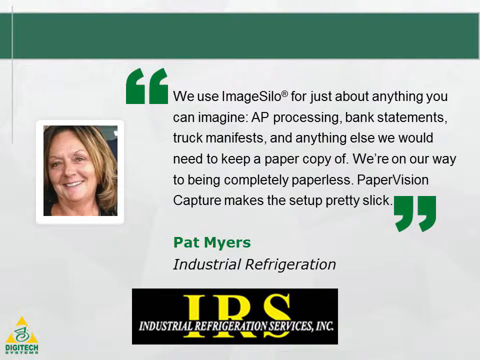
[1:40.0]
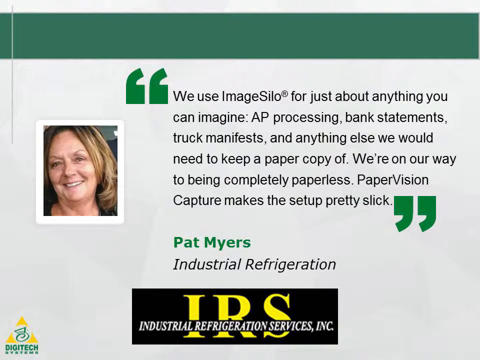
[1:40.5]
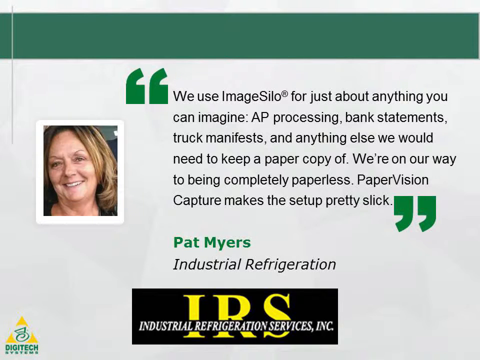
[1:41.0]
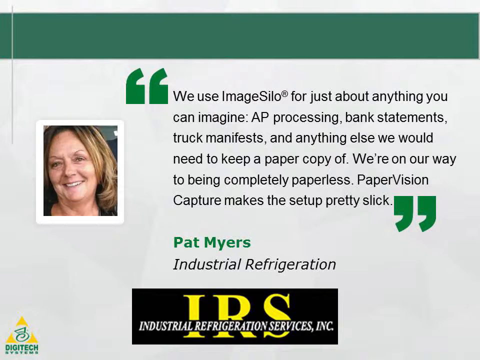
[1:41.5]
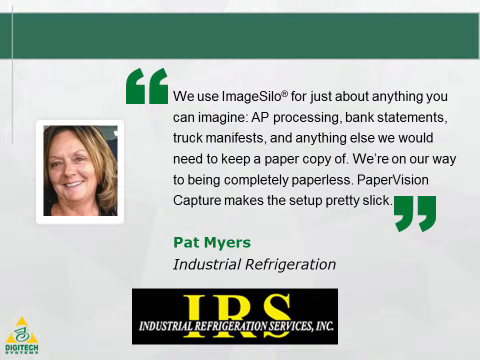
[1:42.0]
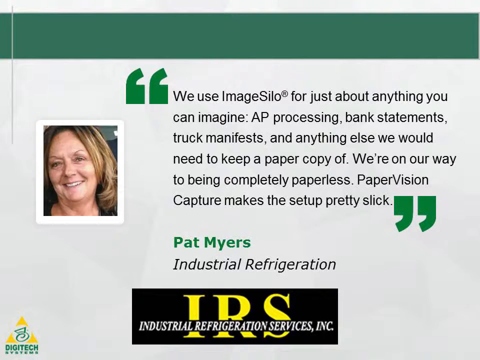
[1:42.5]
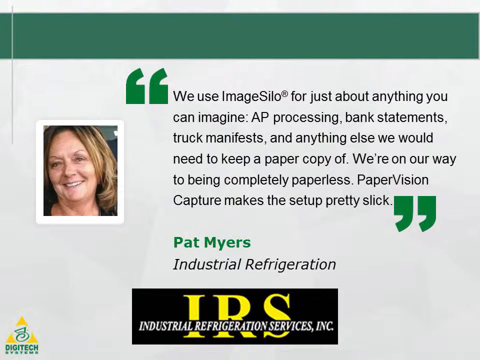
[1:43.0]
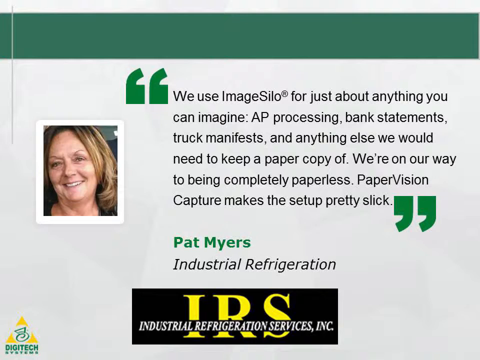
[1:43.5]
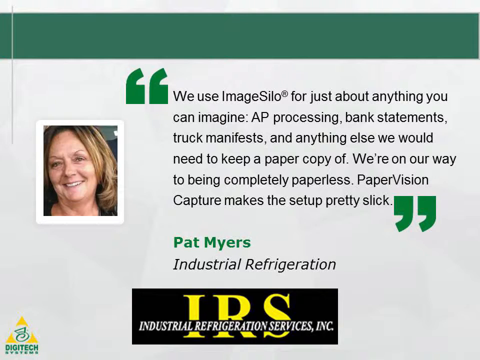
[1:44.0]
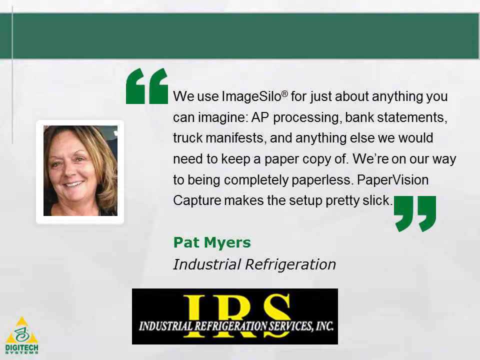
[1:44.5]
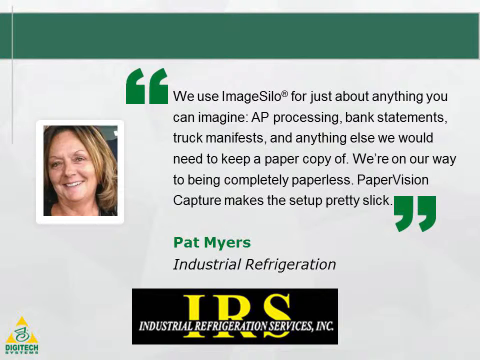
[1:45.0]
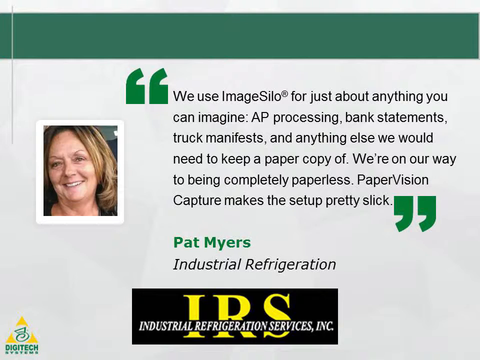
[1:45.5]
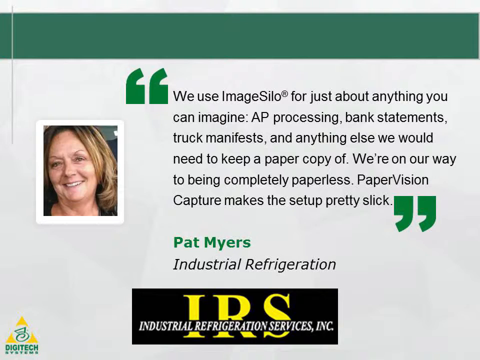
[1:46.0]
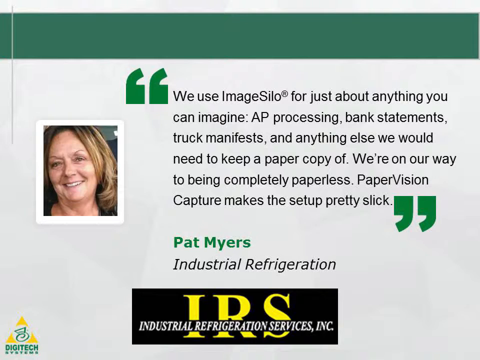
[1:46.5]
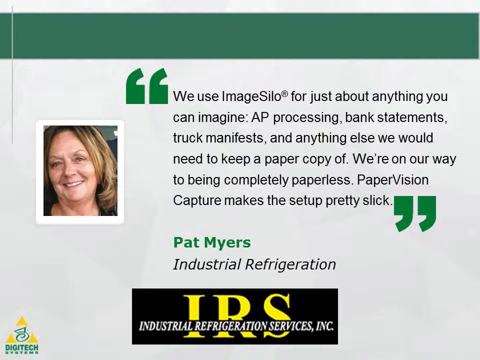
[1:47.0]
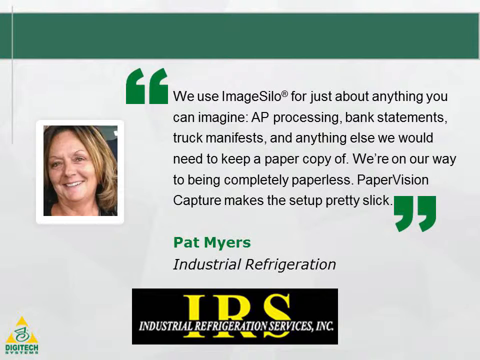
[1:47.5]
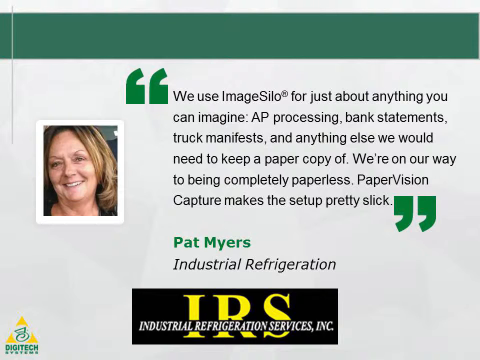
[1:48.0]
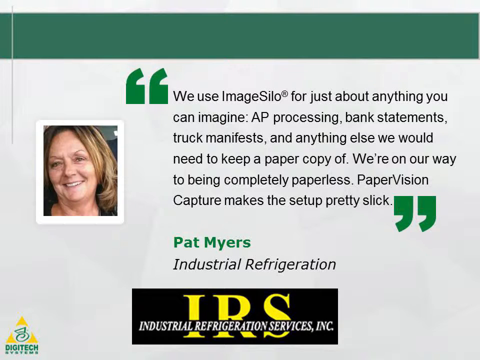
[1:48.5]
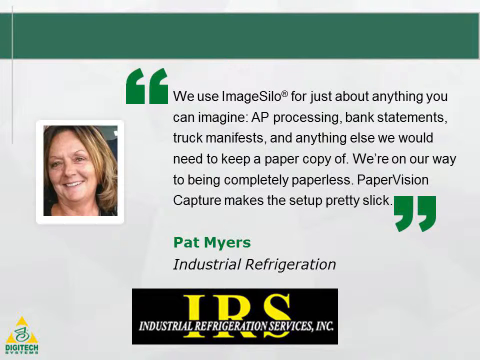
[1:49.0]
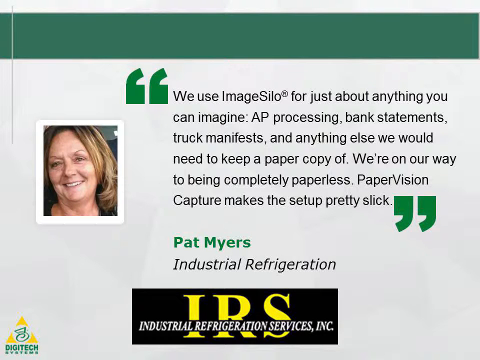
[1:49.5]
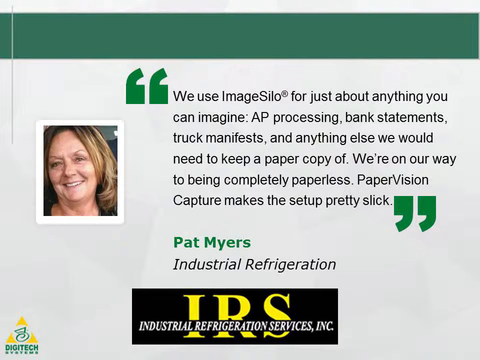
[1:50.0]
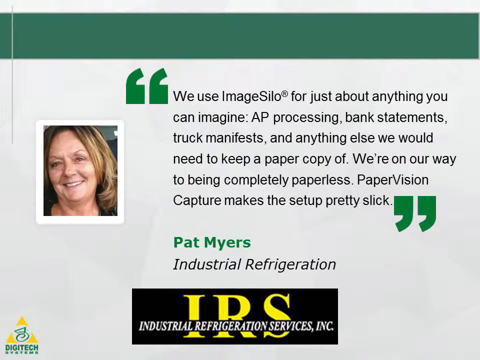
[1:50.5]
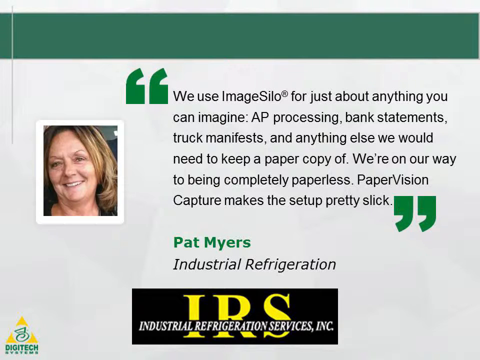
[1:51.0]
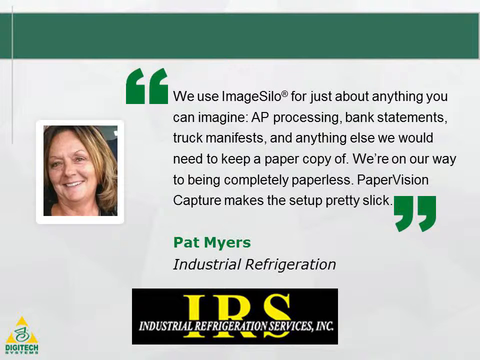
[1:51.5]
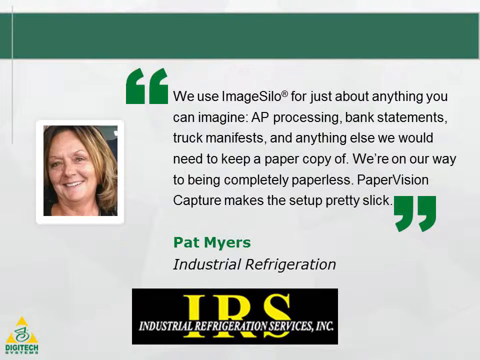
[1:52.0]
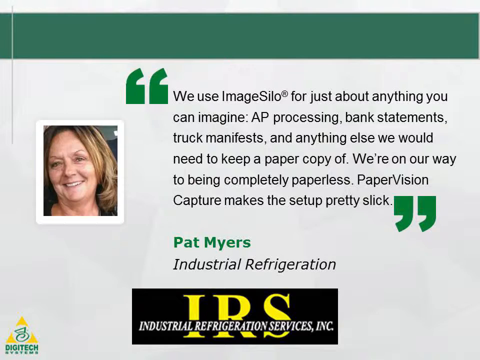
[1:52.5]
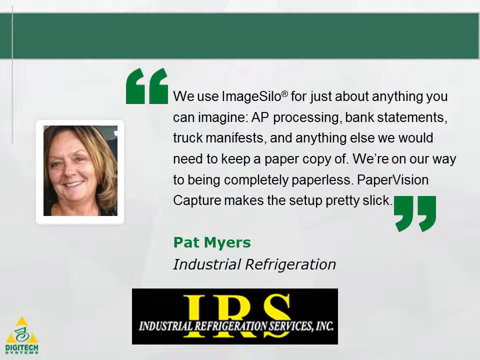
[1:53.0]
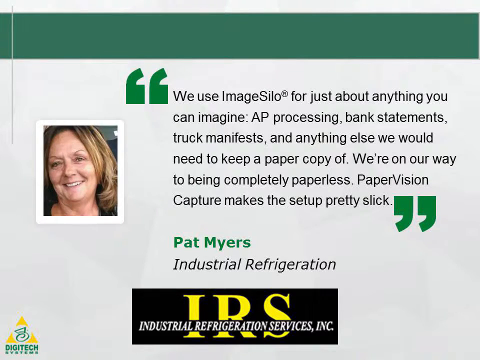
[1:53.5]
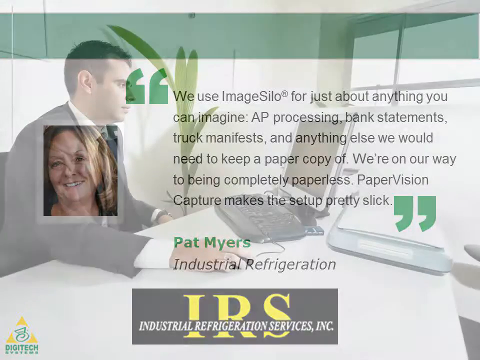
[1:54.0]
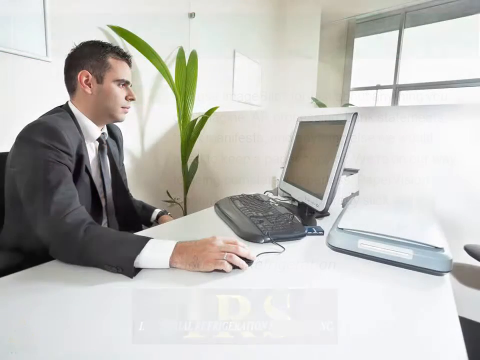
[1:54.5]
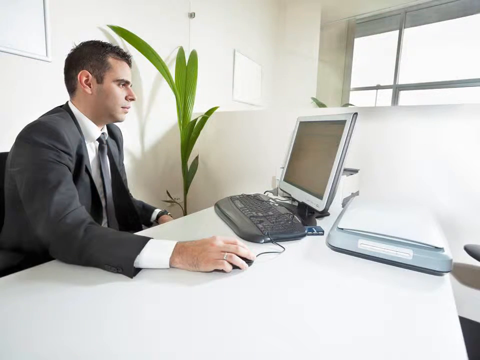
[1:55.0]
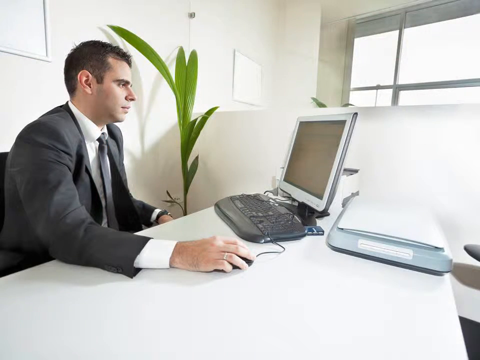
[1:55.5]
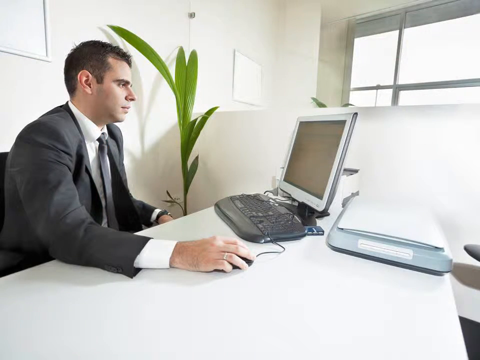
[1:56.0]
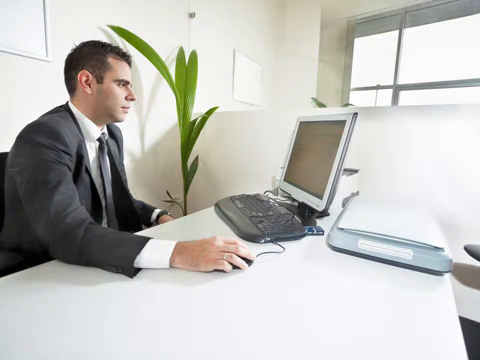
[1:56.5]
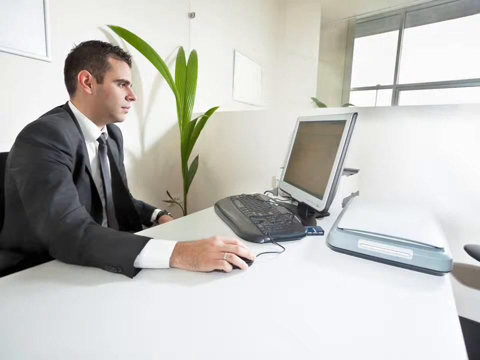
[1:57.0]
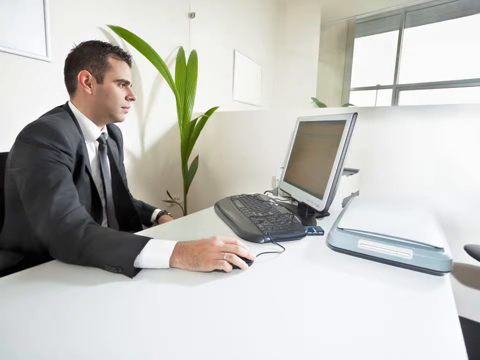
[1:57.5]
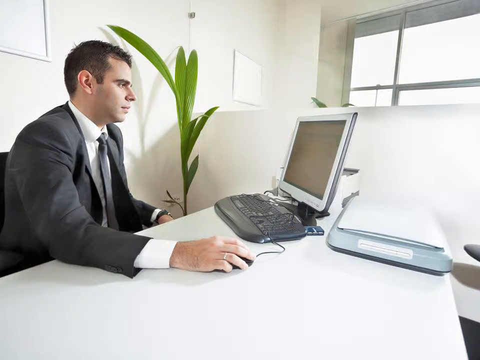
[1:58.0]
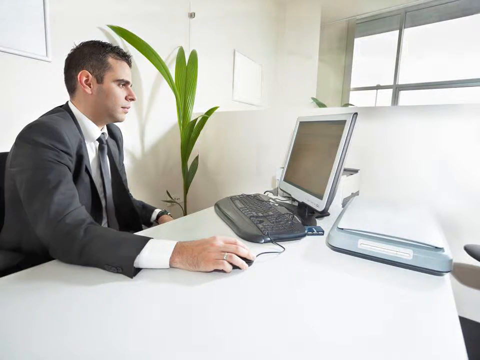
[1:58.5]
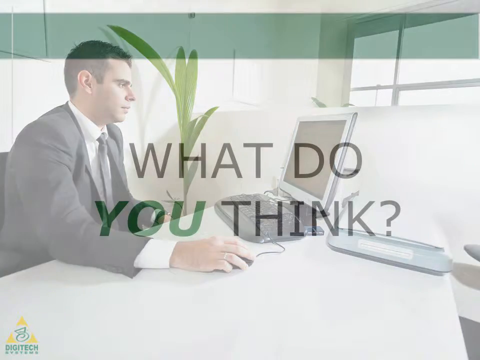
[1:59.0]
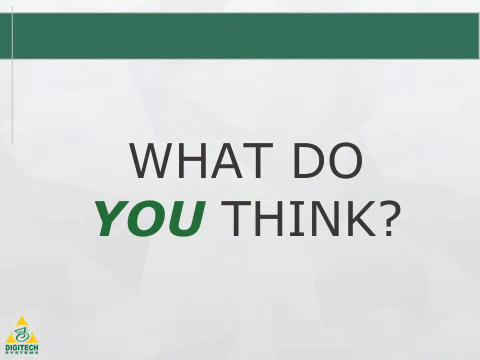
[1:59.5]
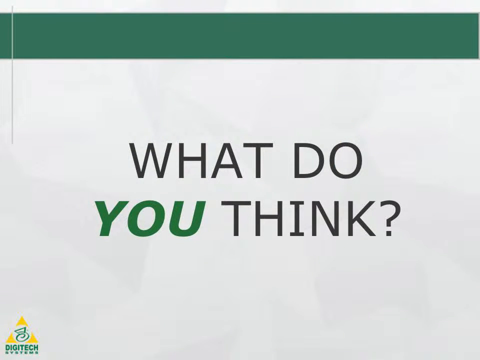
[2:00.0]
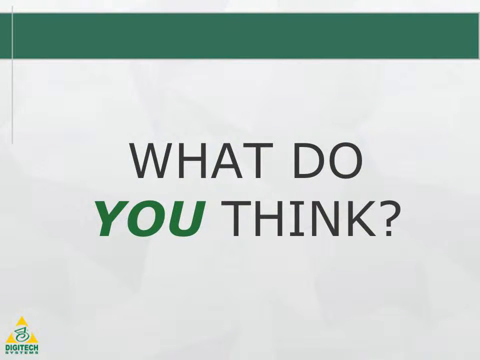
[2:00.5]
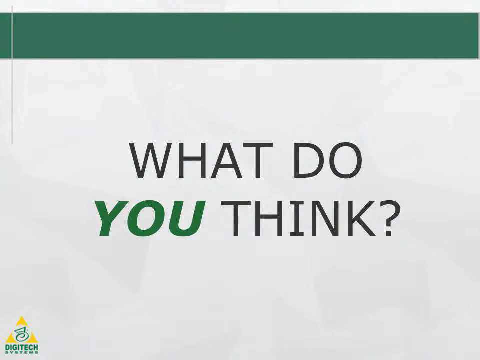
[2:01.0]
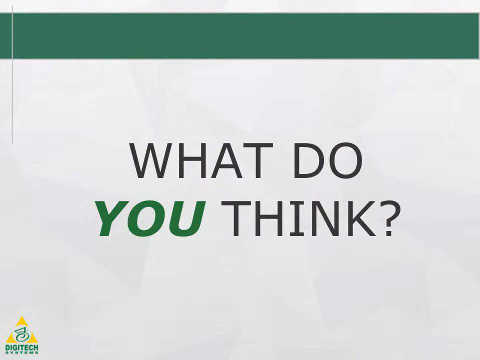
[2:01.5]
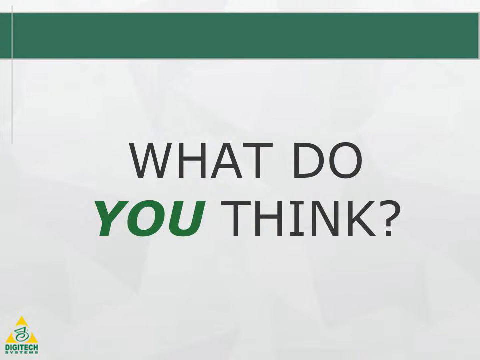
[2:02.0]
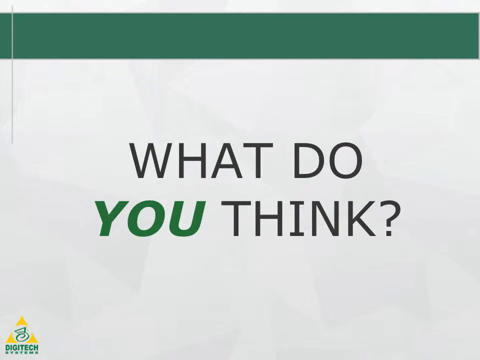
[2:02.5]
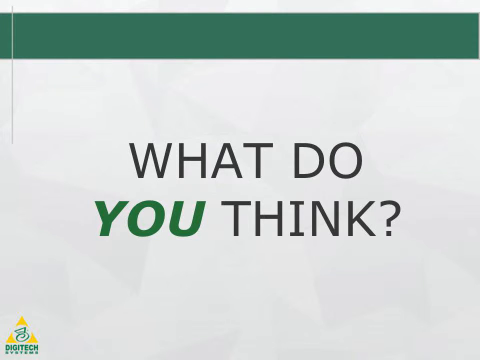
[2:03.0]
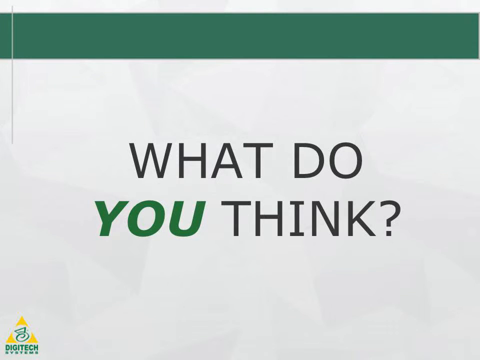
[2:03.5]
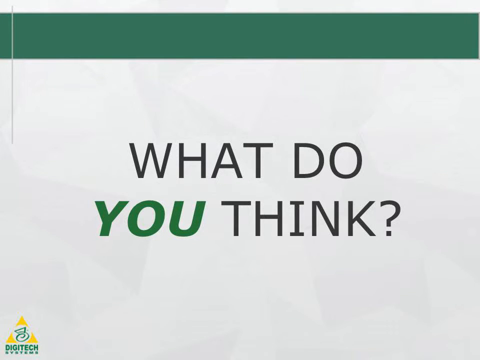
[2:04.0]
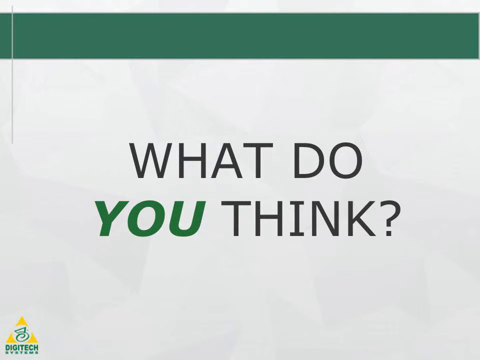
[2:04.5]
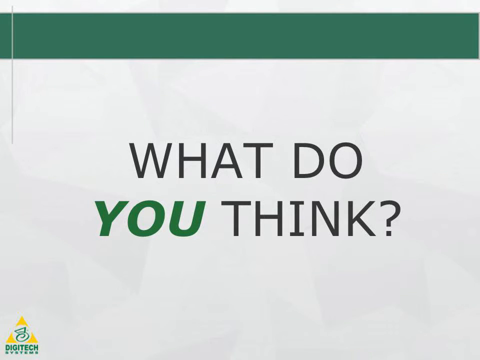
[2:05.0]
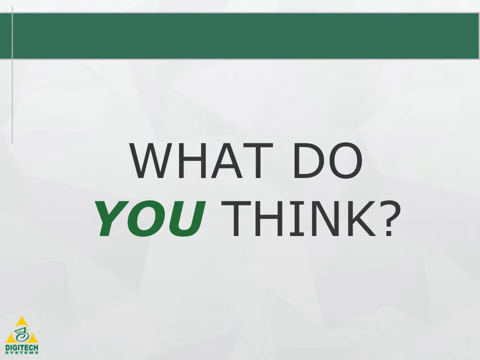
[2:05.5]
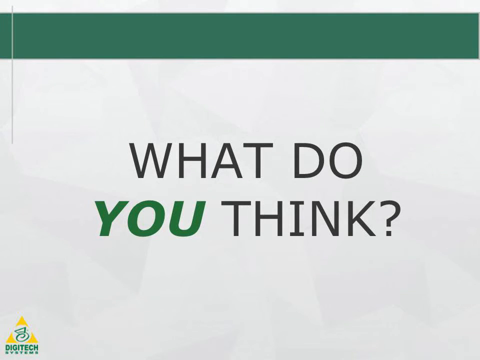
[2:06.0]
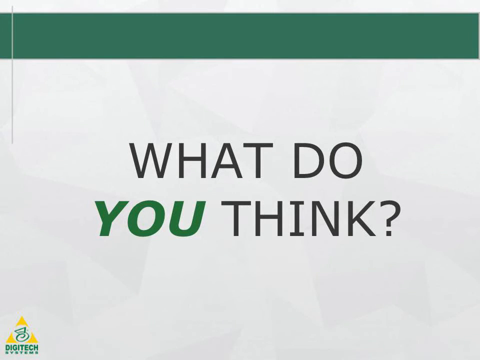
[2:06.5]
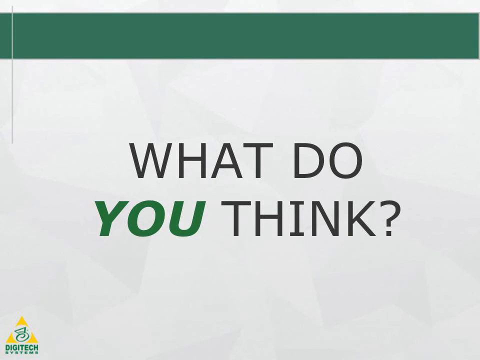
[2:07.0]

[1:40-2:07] A white background takes up about five-sixths of the screen. At the very top is a green rectangle border with nothing in it but green. In the white area, black text in quotation marks reads "we use image silo® for just about anything you can imagine: AP processing, bank statements, truck manifest, and anything else we would need to keep a paper copy of. We're on our way to being completely paperless." Below that, green text reads "Pat Myers", and below that, near the bottom, black text reads "industrial refrigeration". At the very bottom, in a black rectangle, "IRS" appears in yellow text, with white text overlaid near the bottom of the rectangle reading "Industrial Refrigeration Services Incorporated". In the very bottom left corner is a triangle whose angles are formed by three yellow triangles, with a white circle containing some kind of emblem in the center, and below it, black or green text reads "Digitech".